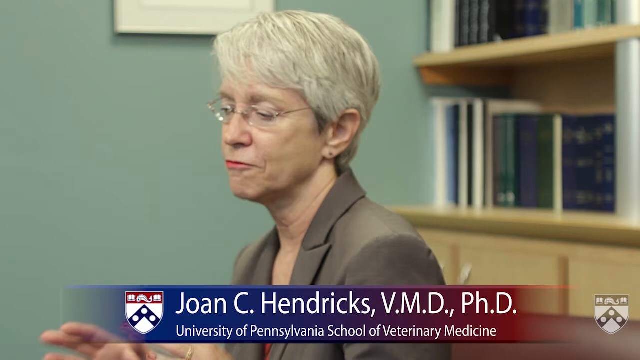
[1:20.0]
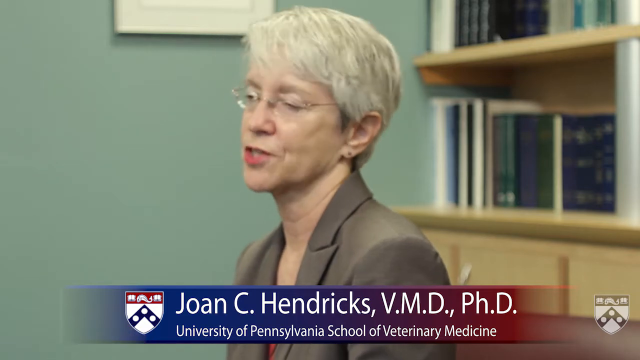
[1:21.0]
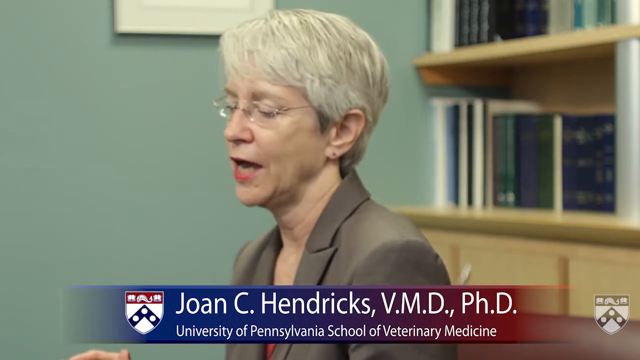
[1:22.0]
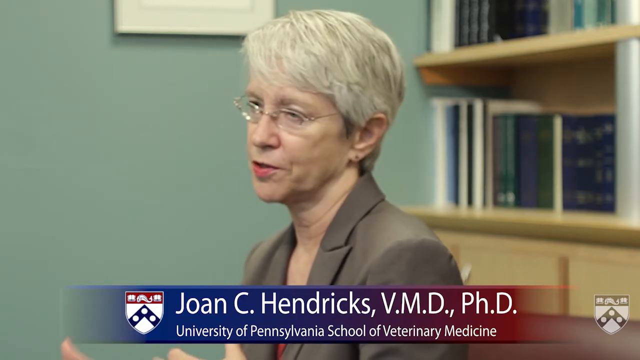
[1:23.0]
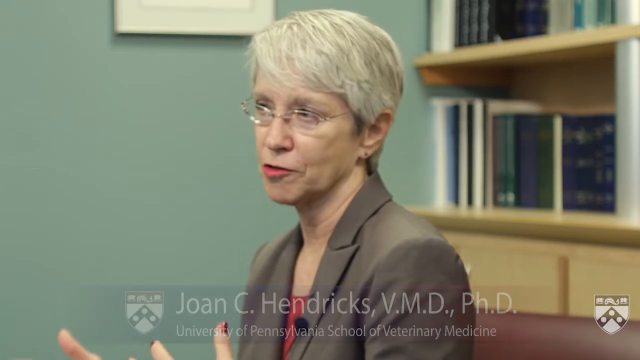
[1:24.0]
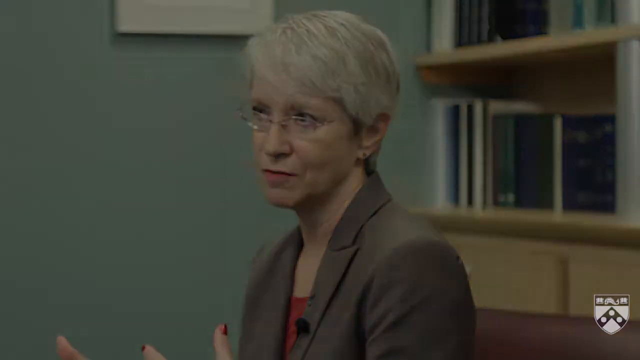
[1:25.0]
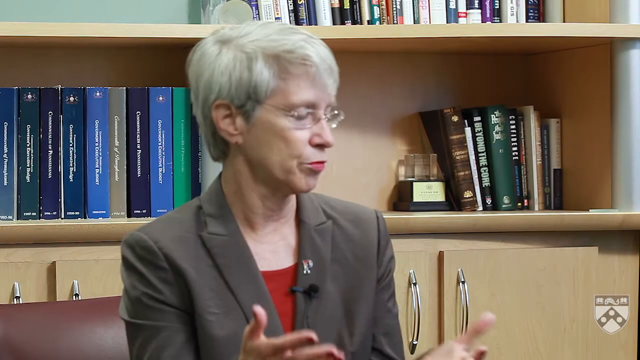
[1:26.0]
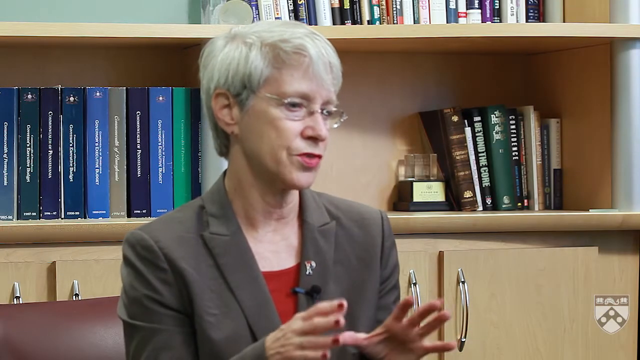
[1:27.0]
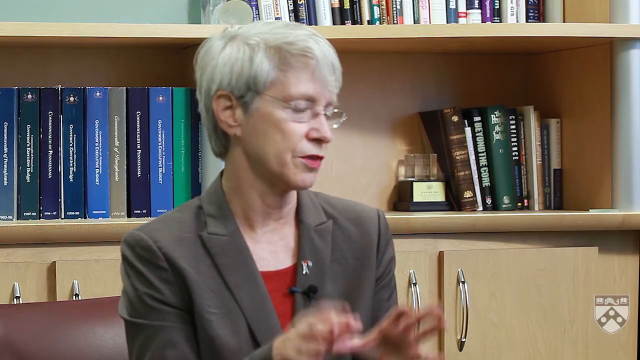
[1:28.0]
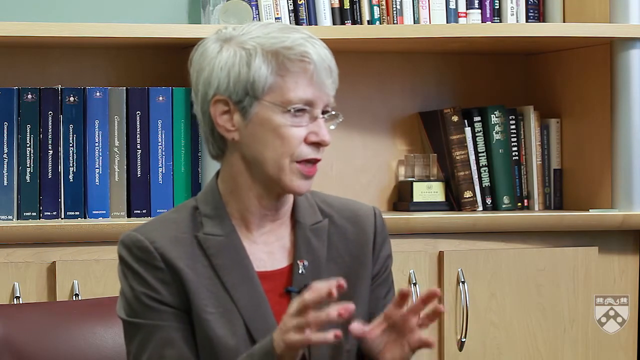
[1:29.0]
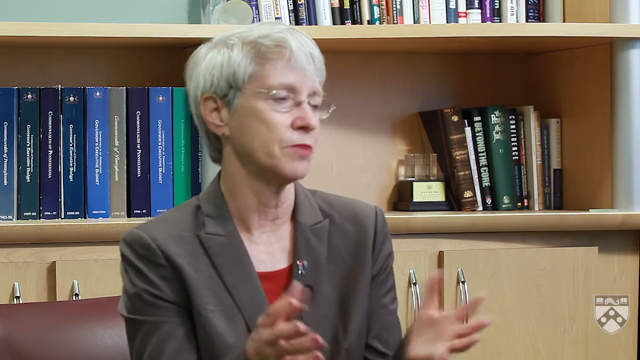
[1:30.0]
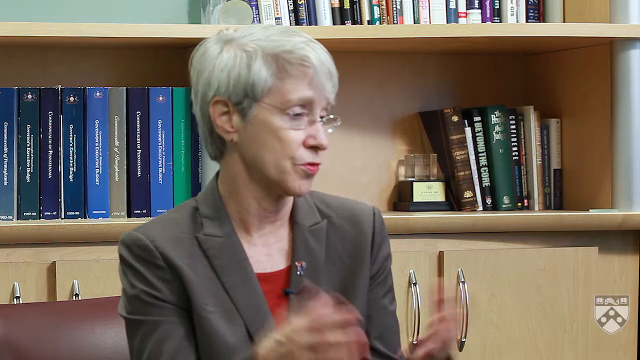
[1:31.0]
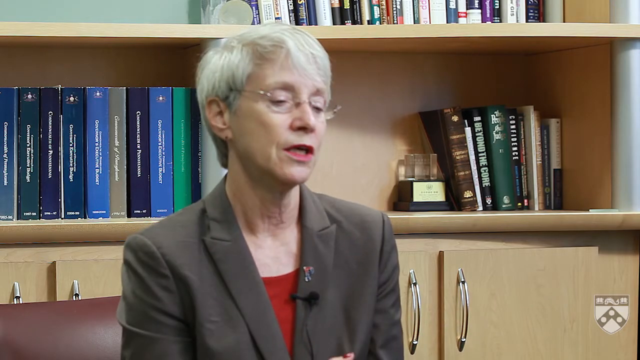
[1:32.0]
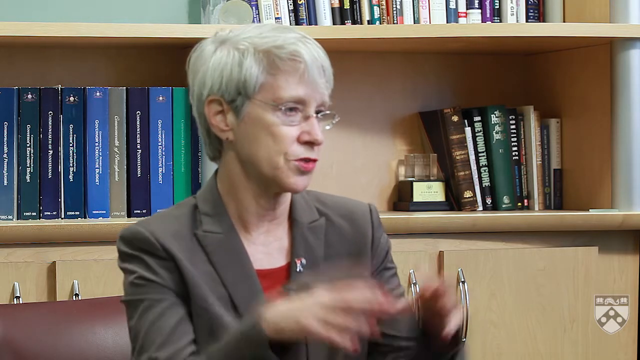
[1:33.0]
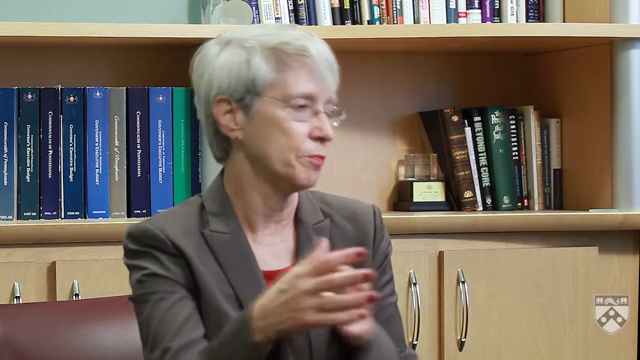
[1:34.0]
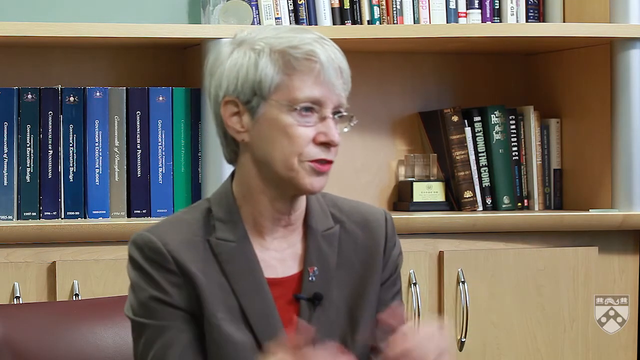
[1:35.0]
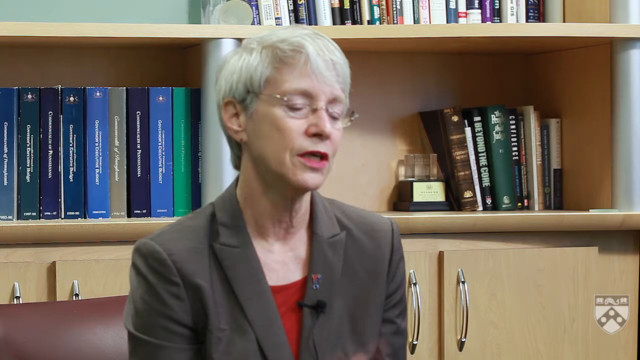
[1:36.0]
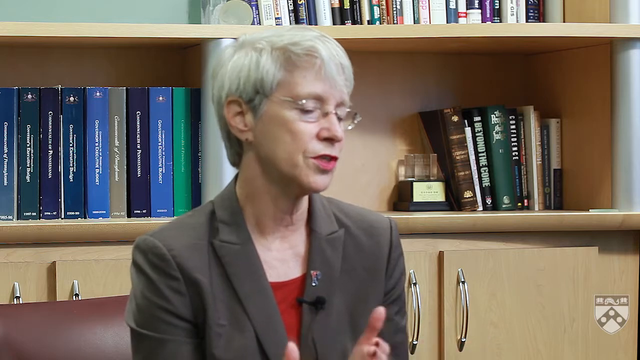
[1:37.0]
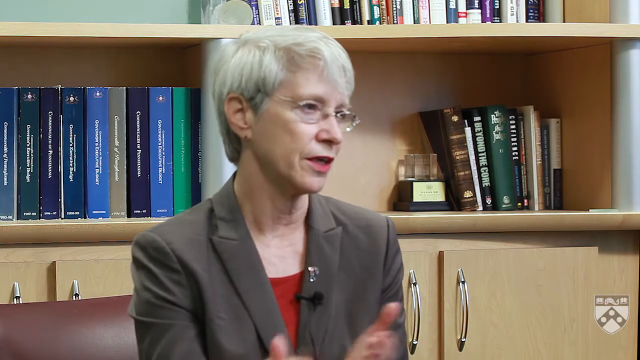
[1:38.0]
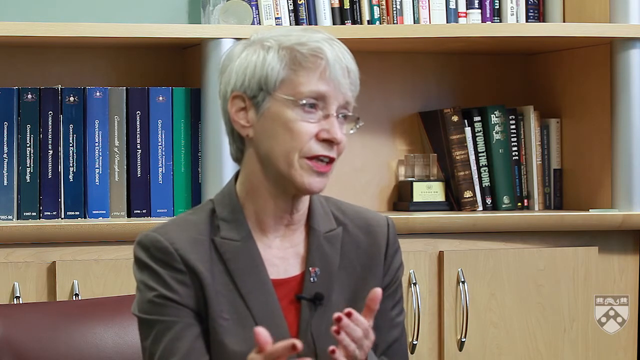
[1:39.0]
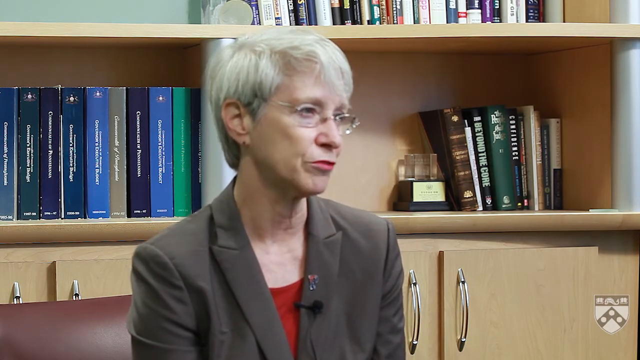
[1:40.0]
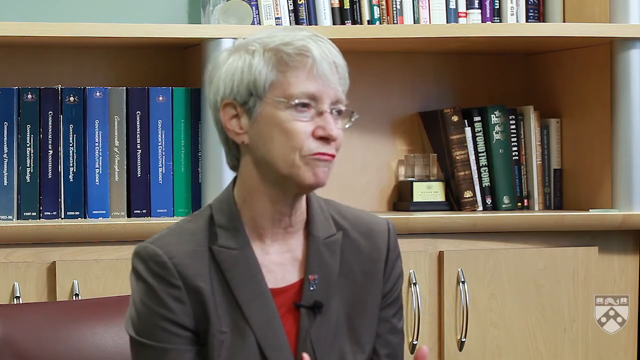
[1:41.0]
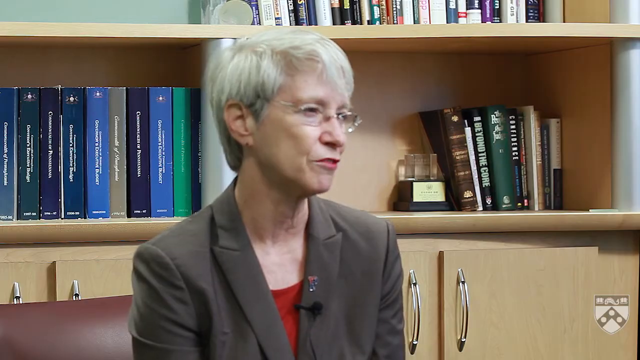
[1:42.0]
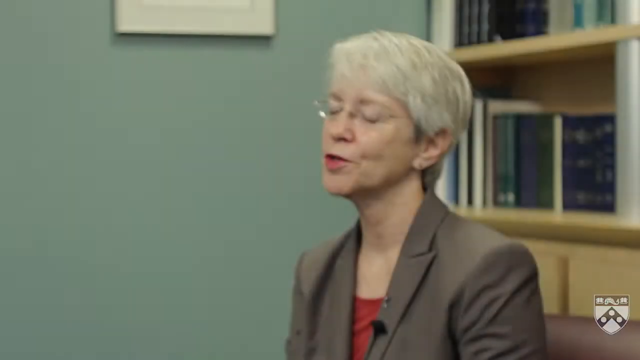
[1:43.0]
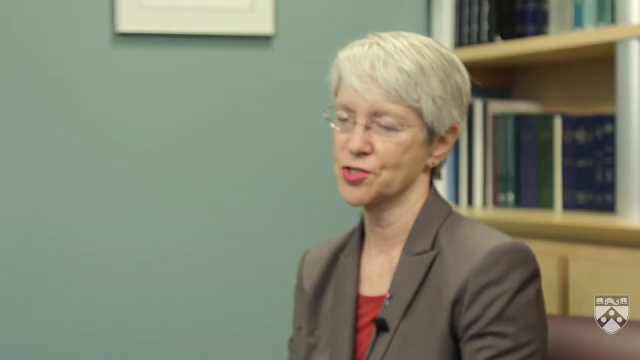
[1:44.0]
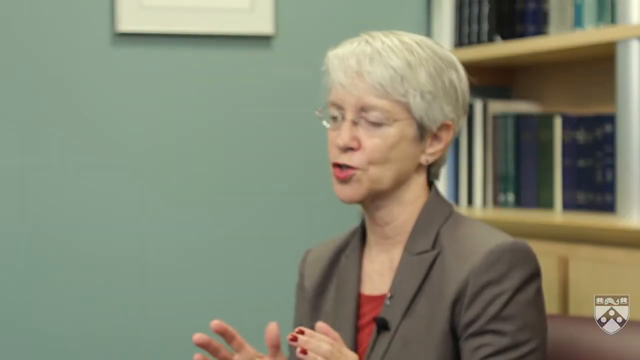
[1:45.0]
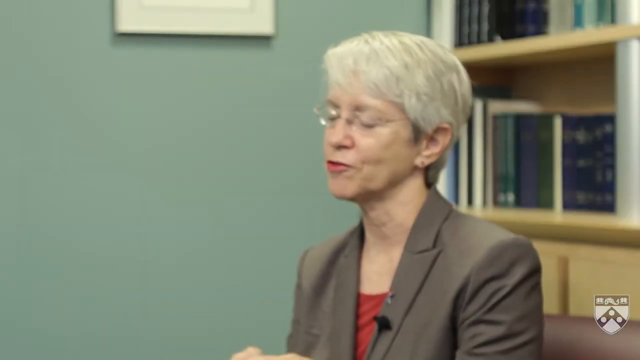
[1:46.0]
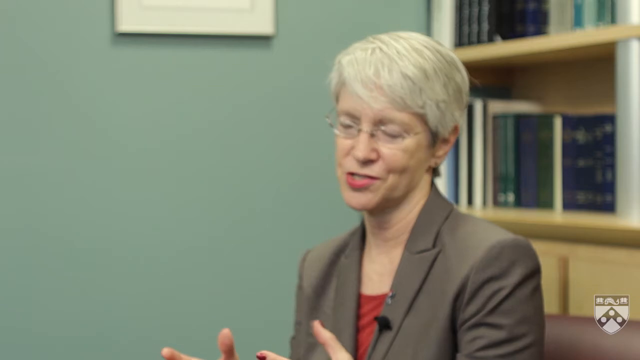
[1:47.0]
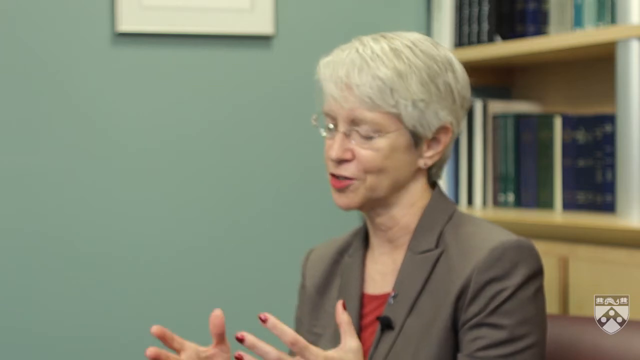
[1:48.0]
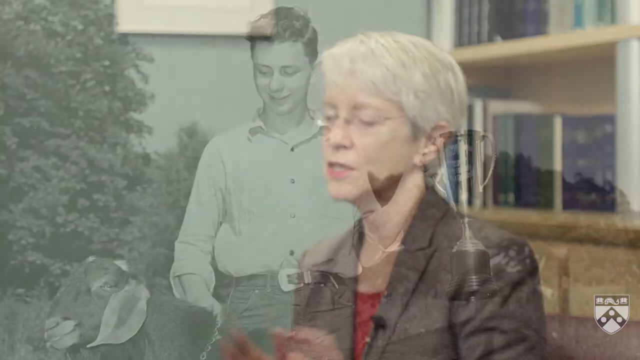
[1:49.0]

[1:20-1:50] Joan C. Hendricks of the University of Pennsylvania School of Veterinary Medicine is interviewed. She faces the left, then the angle changes and she faces more toward the right. She uses her hands a lot while talking, and her fingernails are painted a red or burgundy color. The angle changes again and she faces left. A black-and-white picture then shows a young man, maybe a young boy, possibly in his 20s, holding a gold trophy in his left hand and holding it out to the right in the photo. Trees are in the background, and the sky does not seem to have clouds.